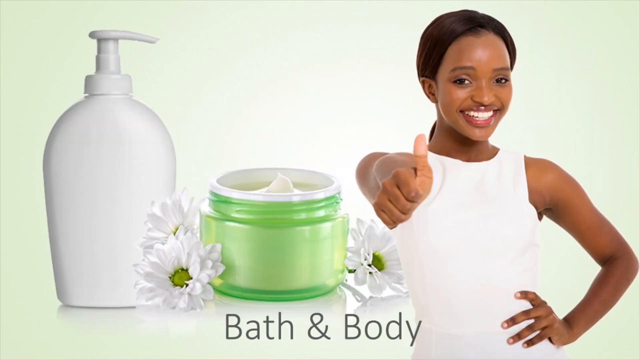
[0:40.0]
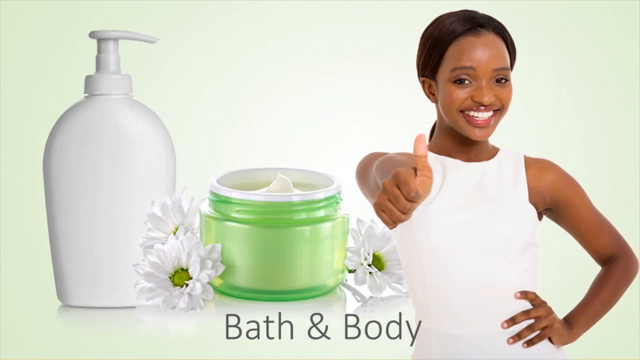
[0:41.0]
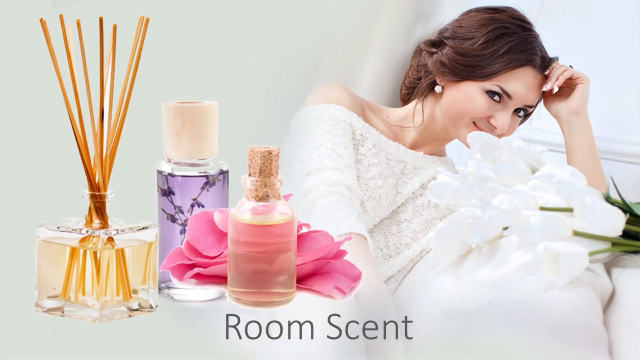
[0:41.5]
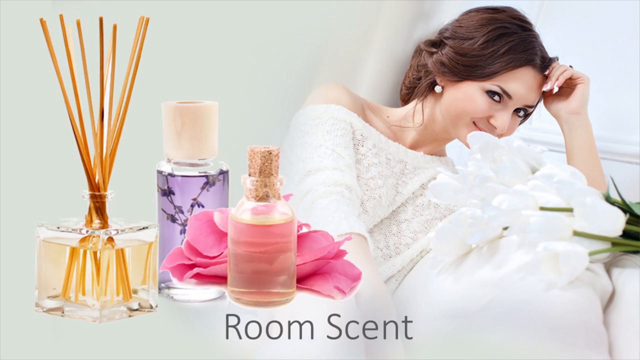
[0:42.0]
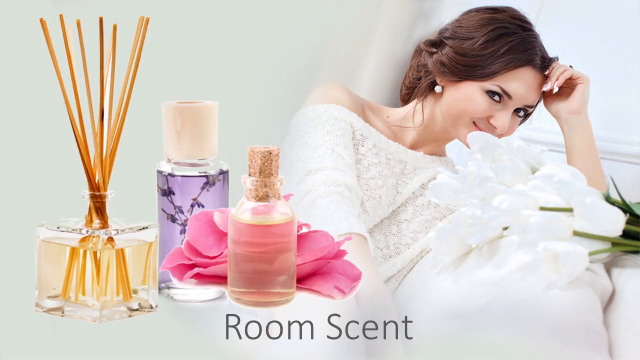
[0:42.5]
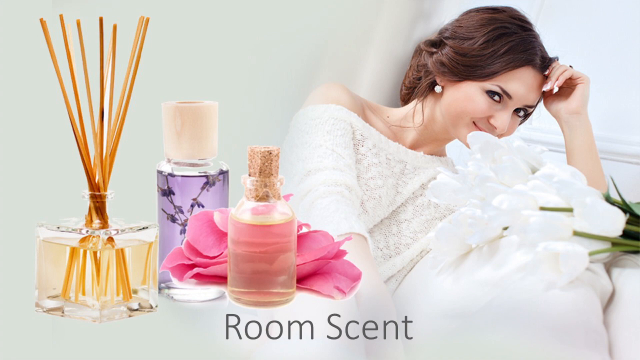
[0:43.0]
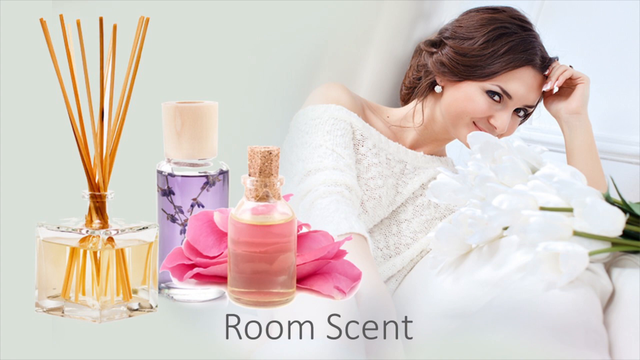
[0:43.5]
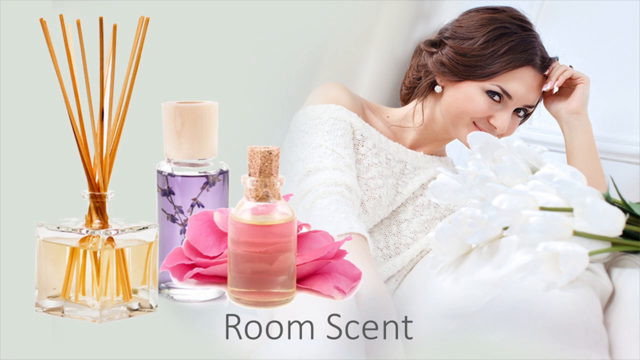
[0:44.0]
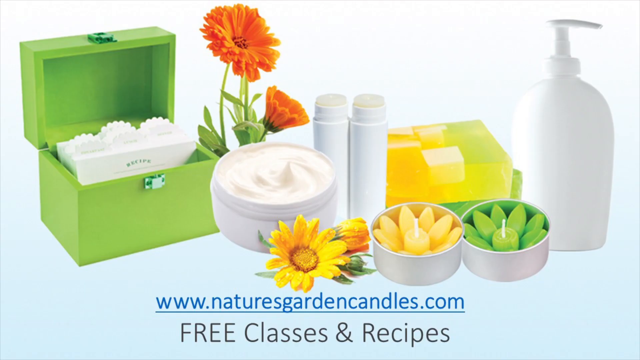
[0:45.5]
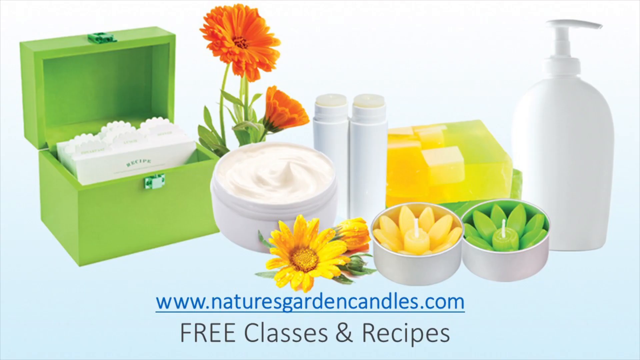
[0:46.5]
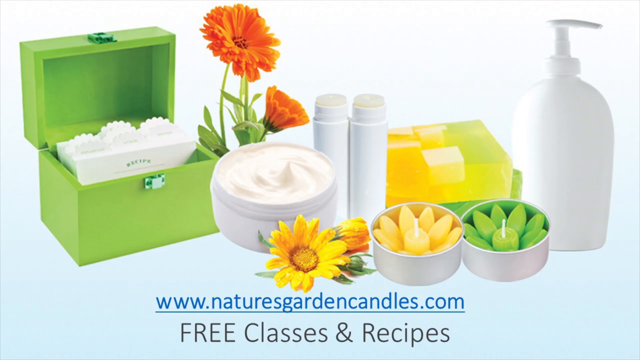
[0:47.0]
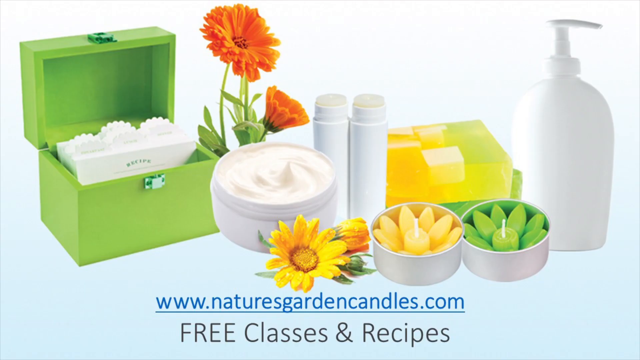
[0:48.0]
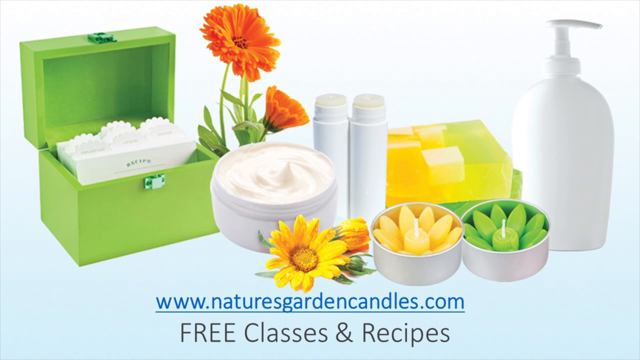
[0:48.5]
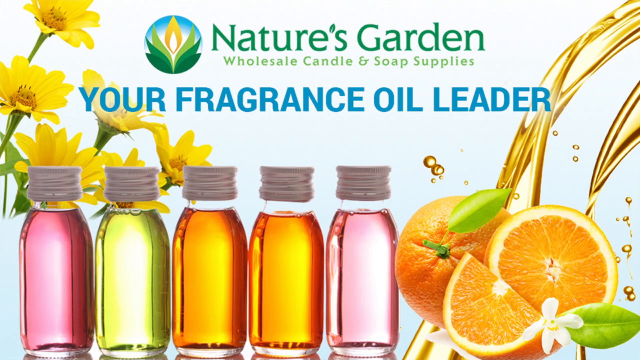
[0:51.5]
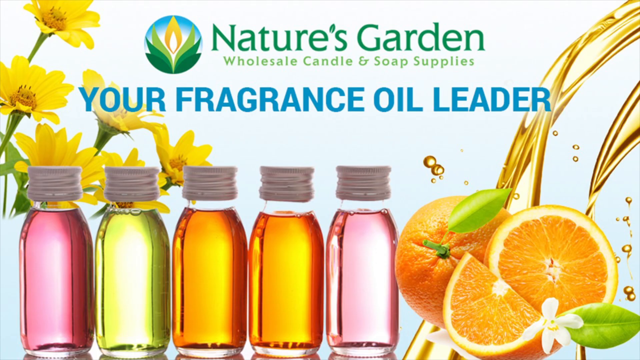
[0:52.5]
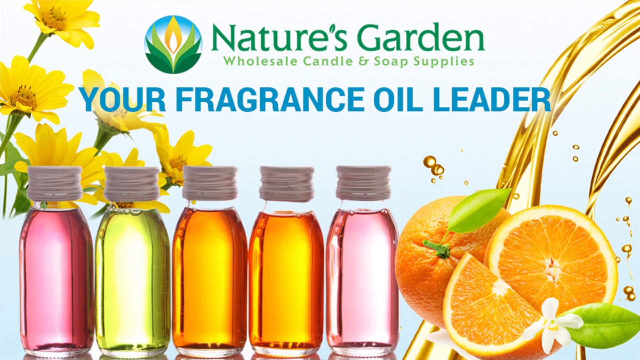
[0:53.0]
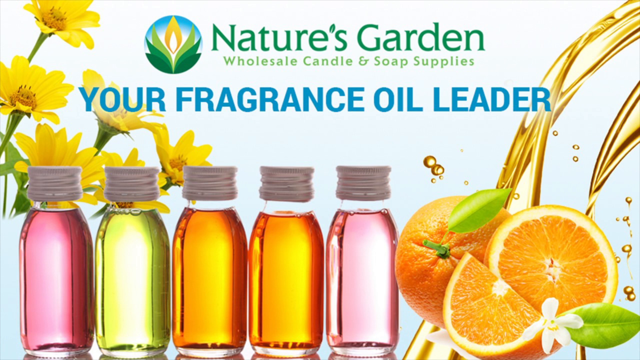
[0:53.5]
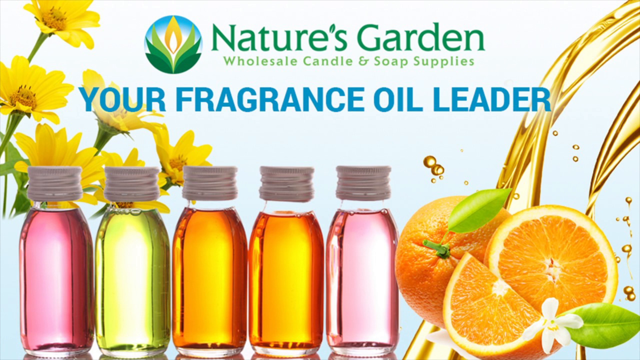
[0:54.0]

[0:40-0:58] The woman is smiling, to the right of a green tub that is apparently zoomed in, since it looks like it is her size. The lid is off, and some of the cream is whipped up in the middle. The tub is green with a white rim at the top, and the cream itself is white. To her left is a tall, plain pump bottle with no writing on it, and sandwiched between them are a couple of little white flowers. She has her left hand on her left hip and her right thumb in front giving a thumbs up, smiling big. Next, a lady poses sideways, leaning her head on her left hand, wearing a white dress with florals. There is an infused oil item with six things coming out of it and a couple of small pink and purple bottles. Different candles that look like flower candles, tubs of cream and pump soap are shown, with a website at the bottom: "nature's garden candles.com". Another page is full of bottles of fragrance and orange slices, with liquid pouring down onto the slices at the top right. "Nature's Garden" is at the top center, yellow flowers come up past the bottles on the left, and under Nature's Garden, in blue all caps, is "Your Fragrance Oil Leader".